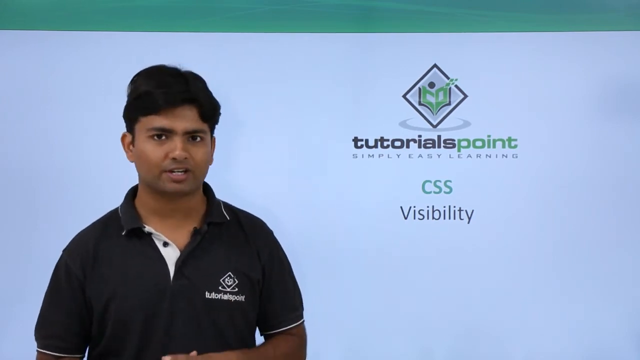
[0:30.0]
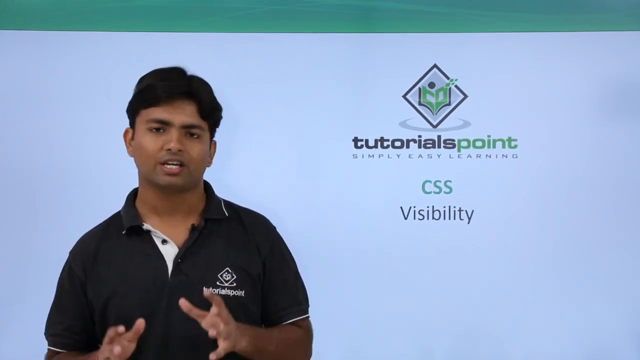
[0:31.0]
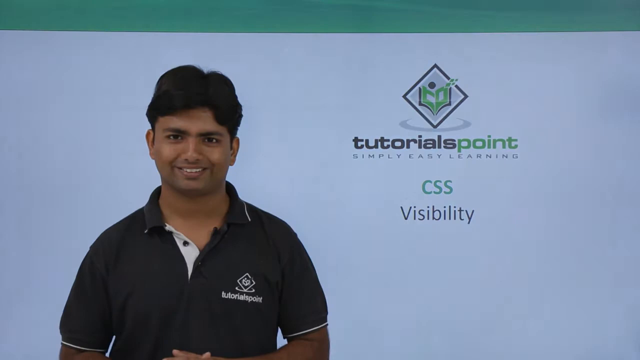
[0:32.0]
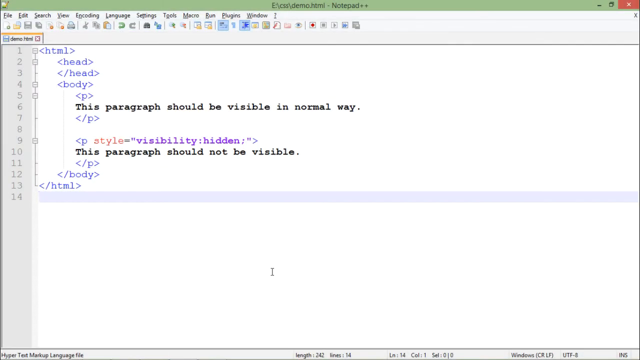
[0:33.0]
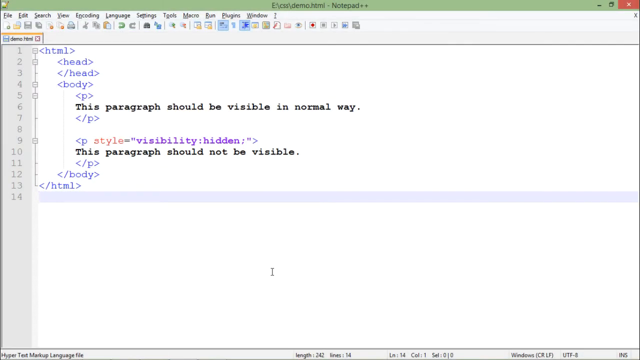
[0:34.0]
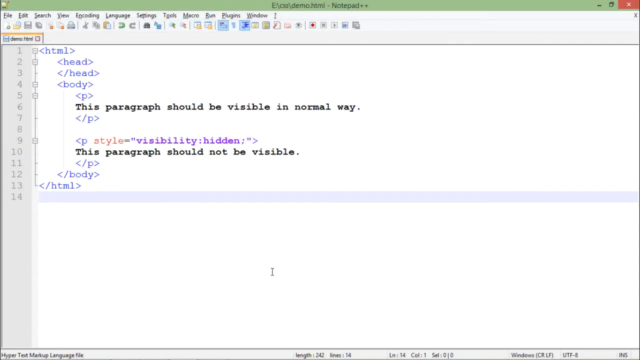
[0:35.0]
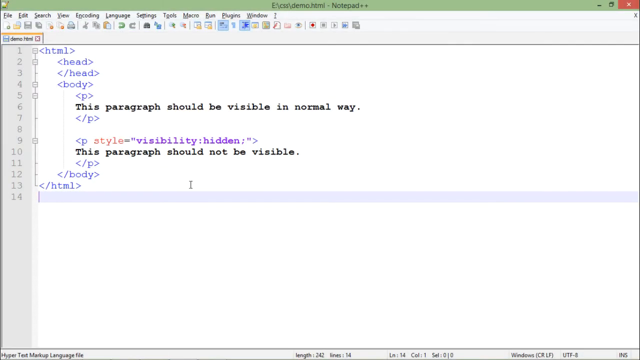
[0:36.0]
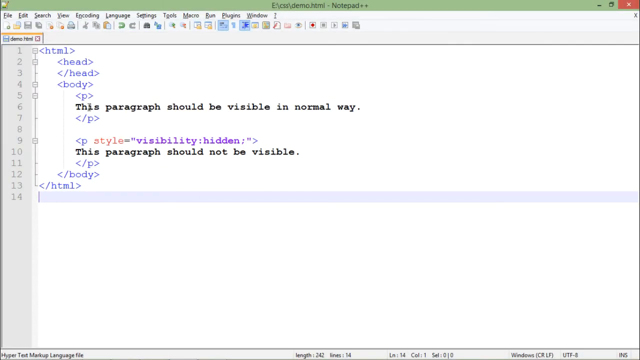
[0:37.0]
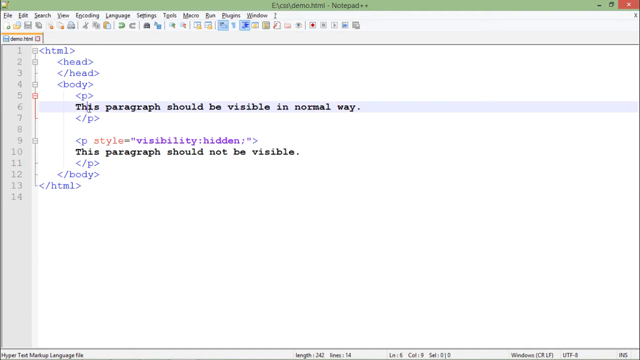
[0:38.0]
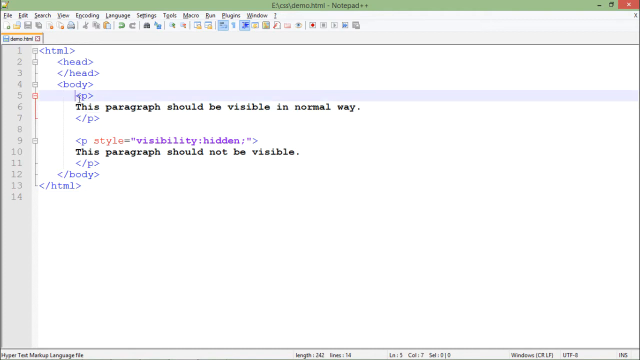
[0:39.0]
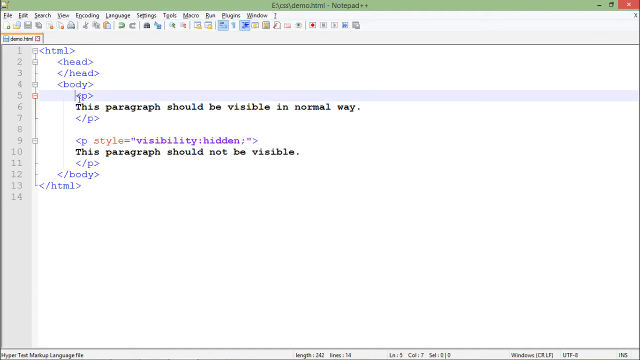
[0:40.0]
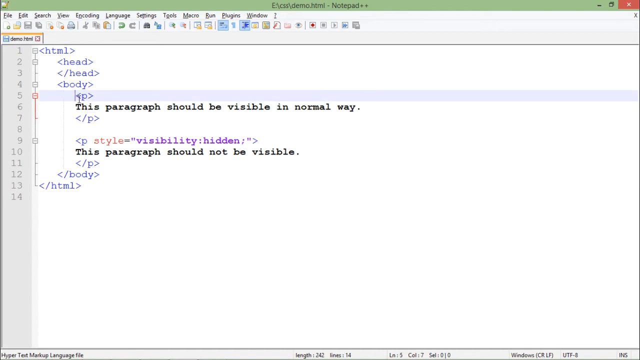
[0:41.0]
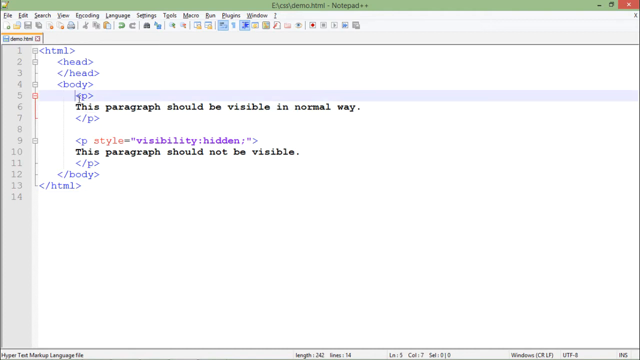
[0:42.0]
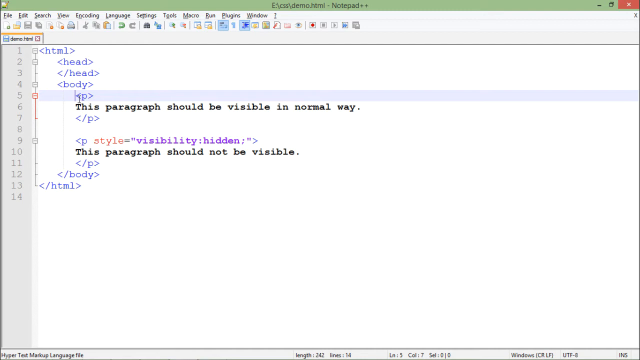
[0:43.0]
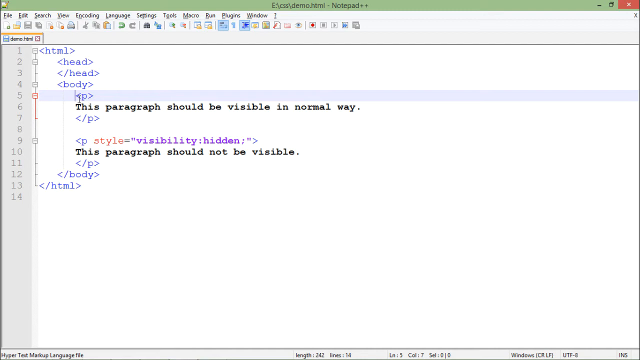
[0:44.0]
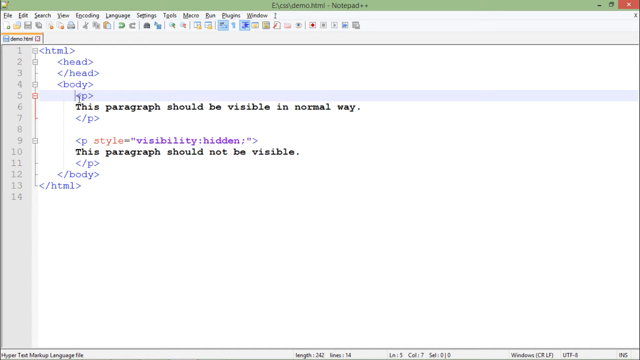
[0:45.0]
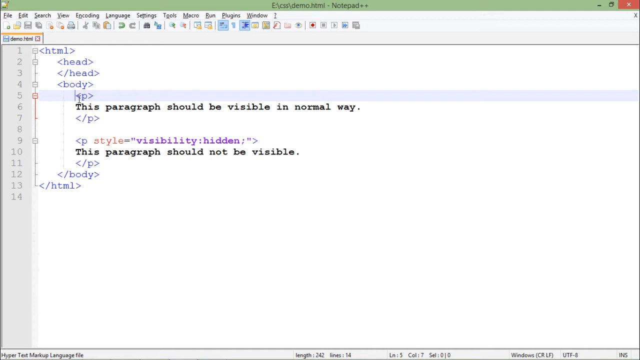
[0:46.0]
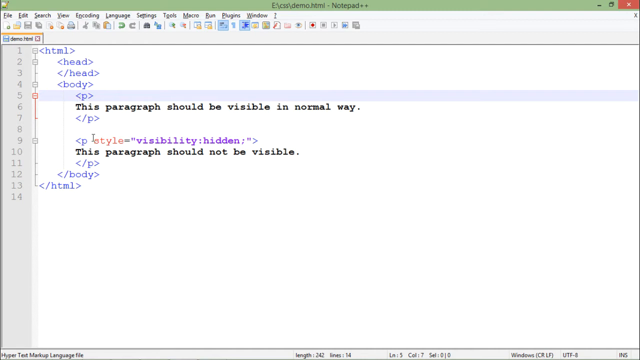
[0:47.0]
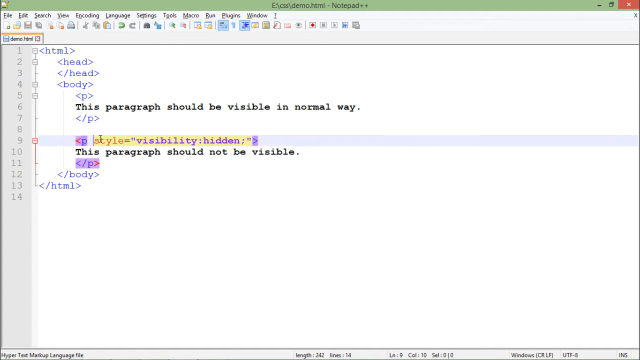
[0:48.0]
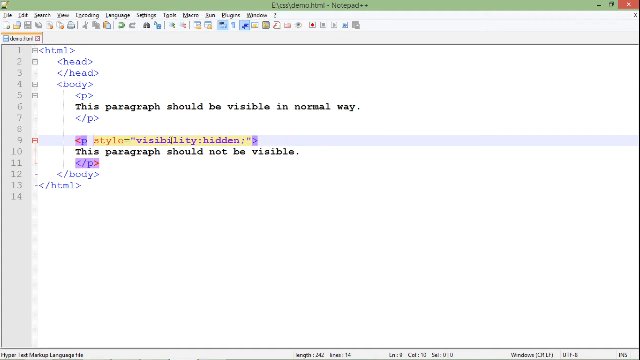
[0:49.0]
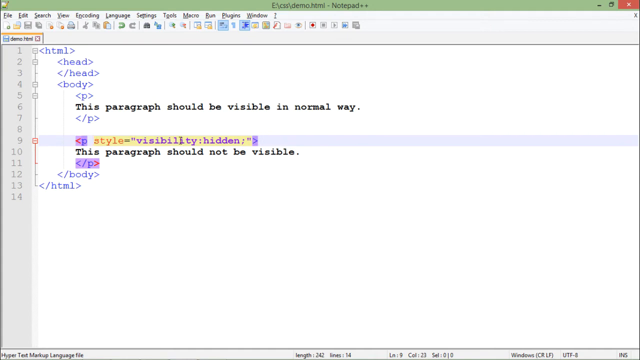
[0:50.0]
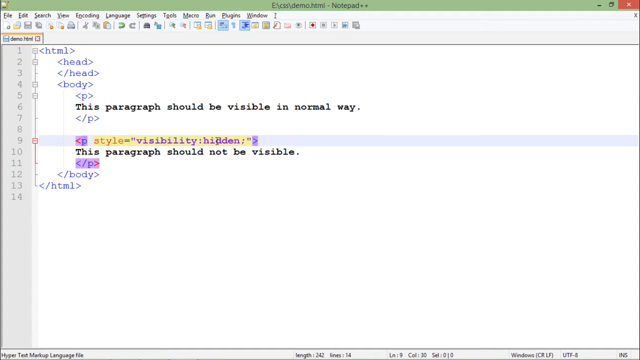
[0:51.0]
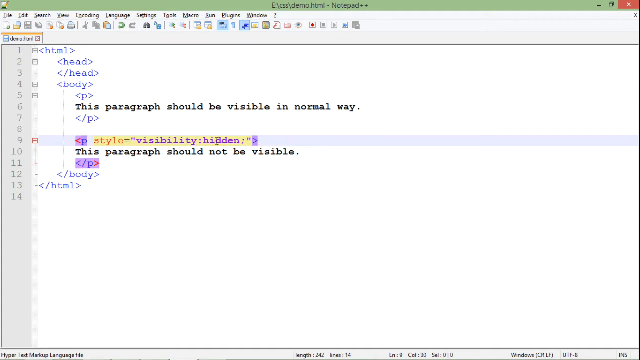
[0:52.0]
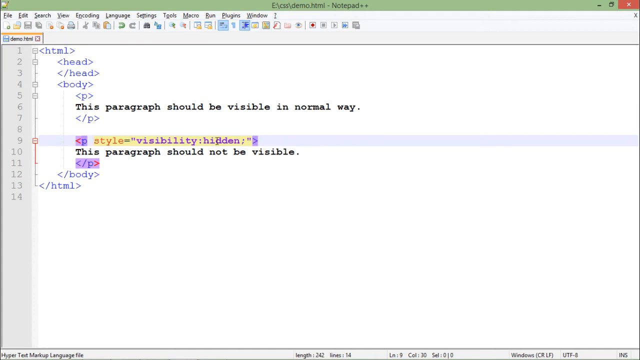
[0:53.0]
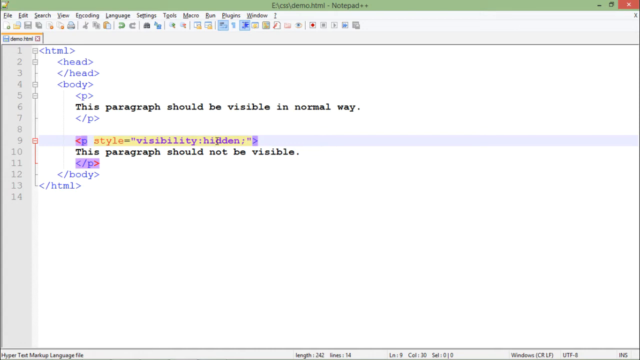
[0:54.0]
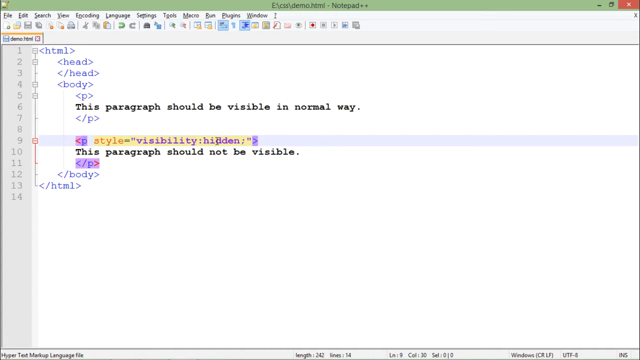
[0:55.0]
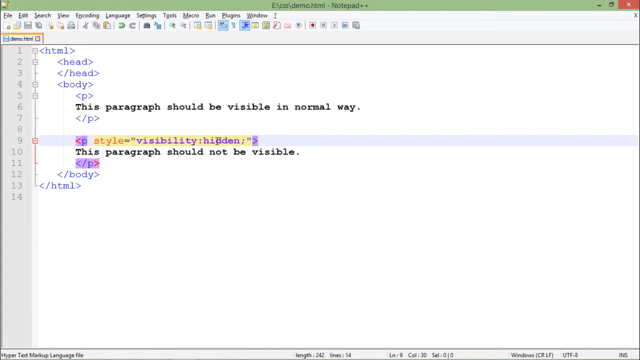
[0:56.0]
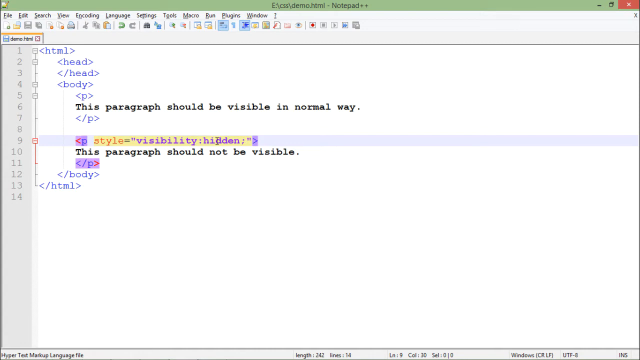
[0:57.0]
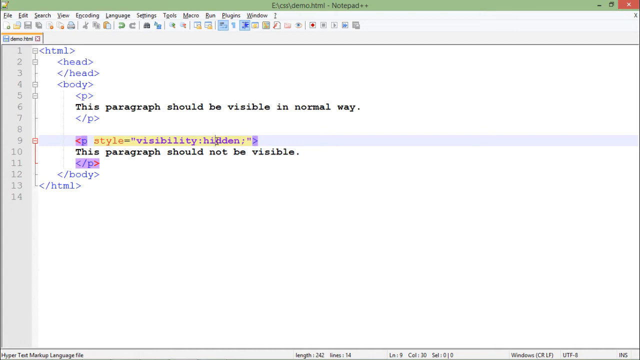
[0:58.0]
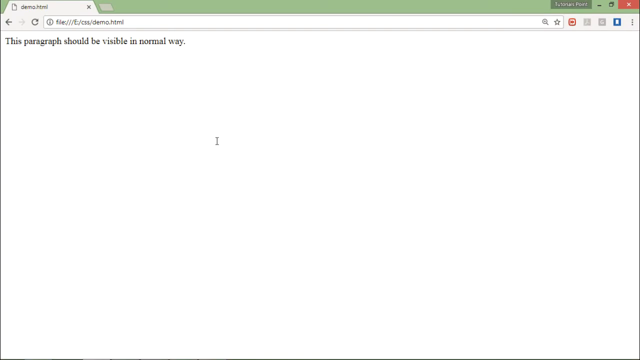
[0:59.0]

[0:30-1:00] The man with black hair and a black shirt appears with text visible on the screen, and then the video transitions to an HTML code section showing body, head and paragraph text in a very basic HTML page structure. No other people and no animals appear. The setting changes once, from the scene with the man and the tutorials point page to the code editor page showing HTML code.